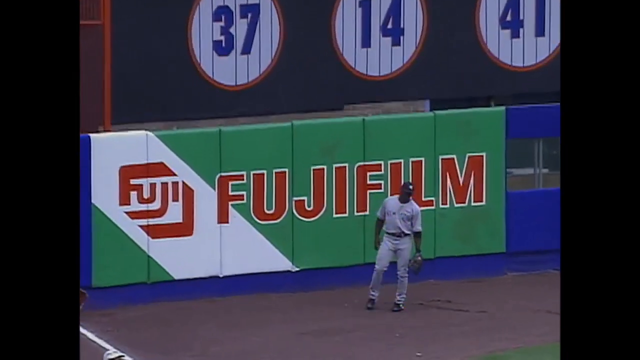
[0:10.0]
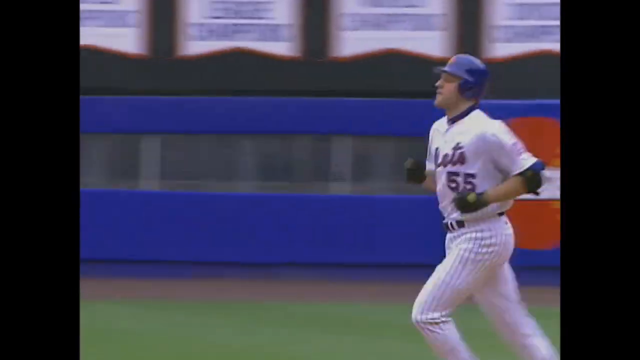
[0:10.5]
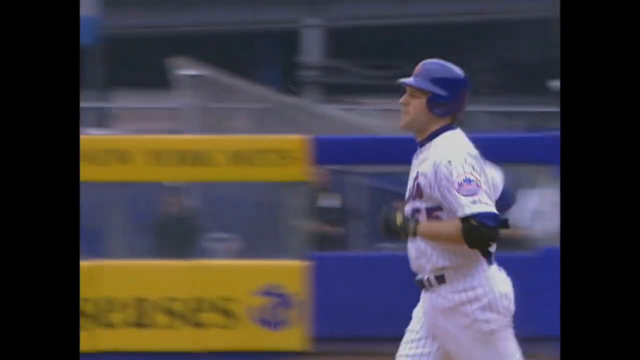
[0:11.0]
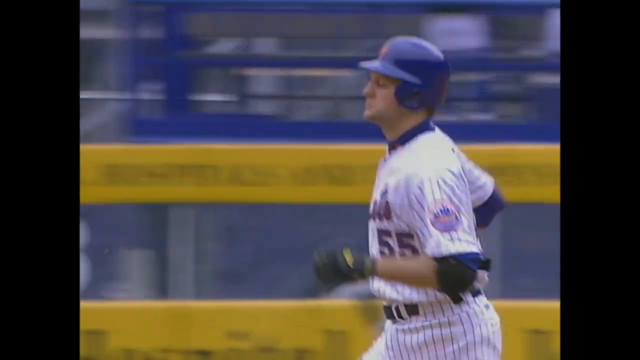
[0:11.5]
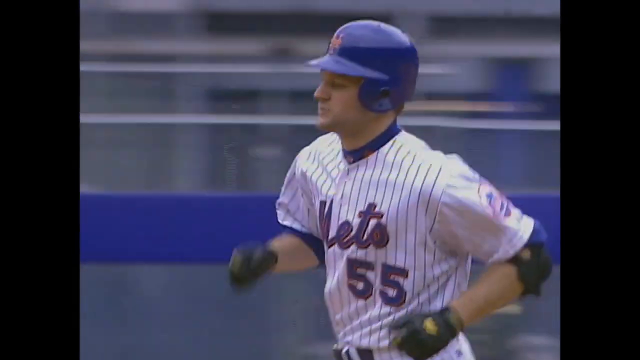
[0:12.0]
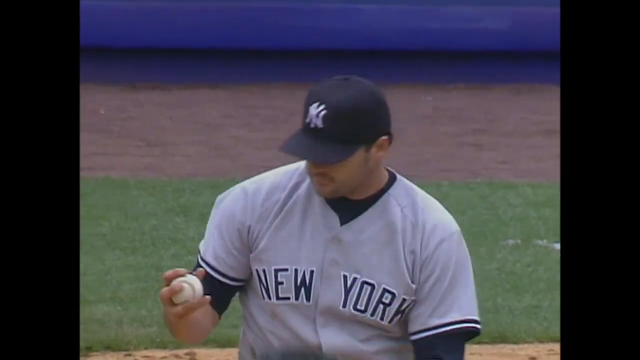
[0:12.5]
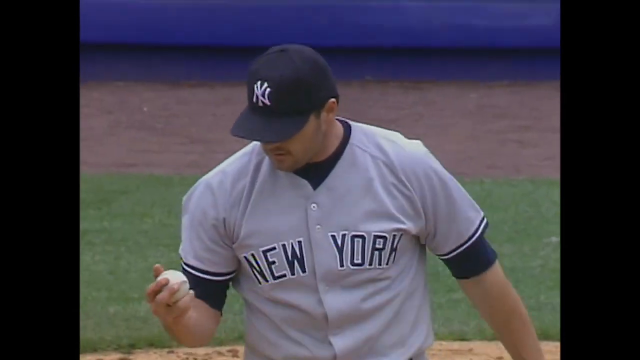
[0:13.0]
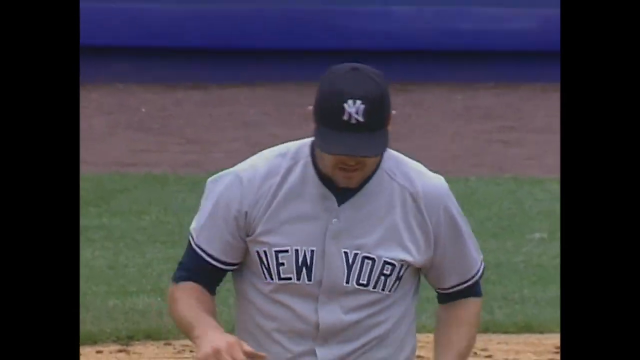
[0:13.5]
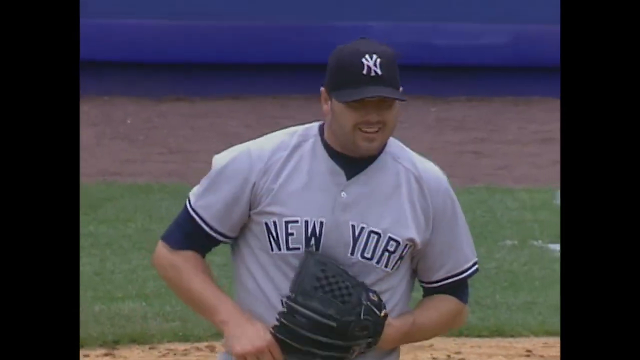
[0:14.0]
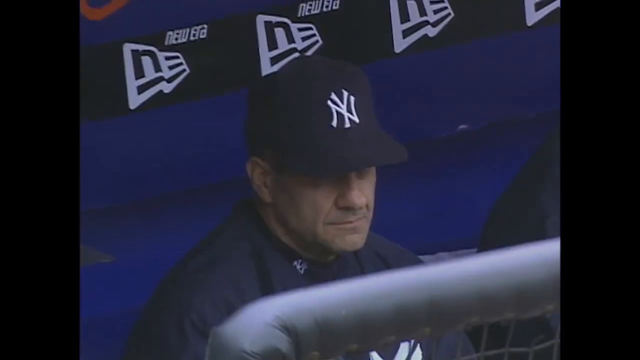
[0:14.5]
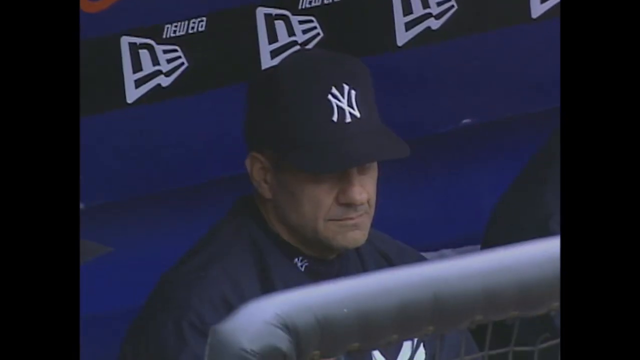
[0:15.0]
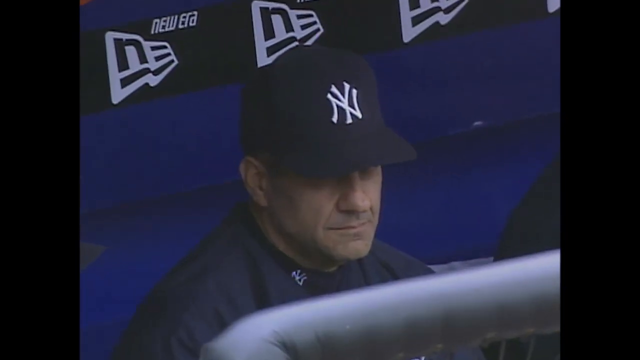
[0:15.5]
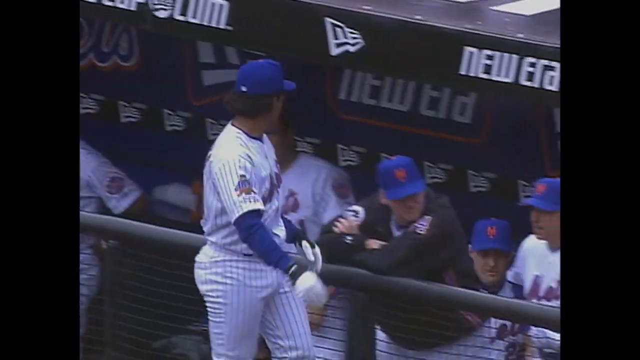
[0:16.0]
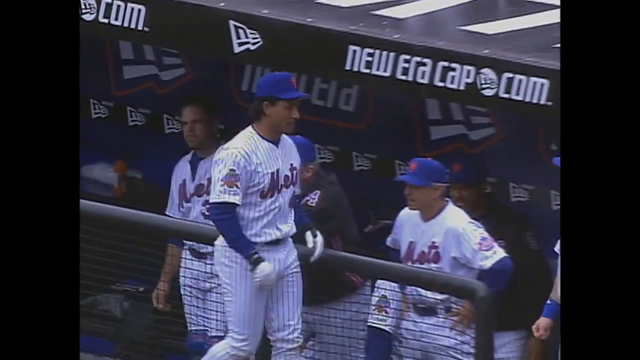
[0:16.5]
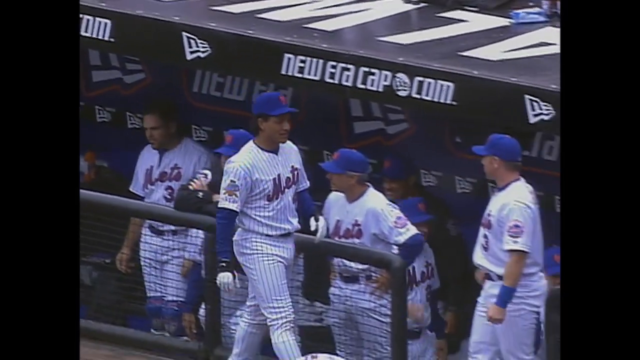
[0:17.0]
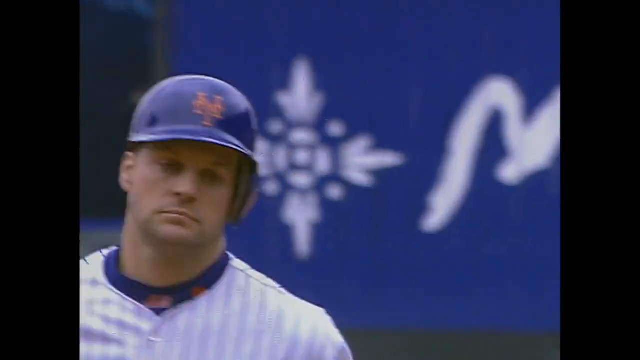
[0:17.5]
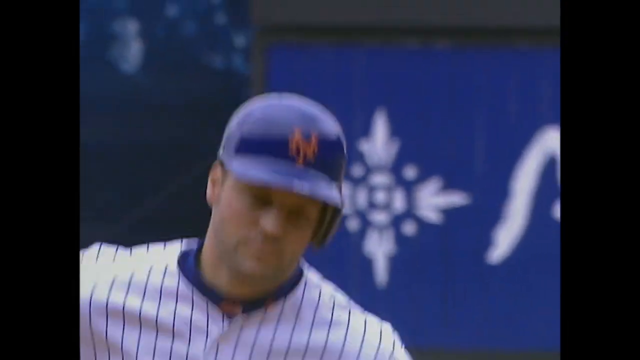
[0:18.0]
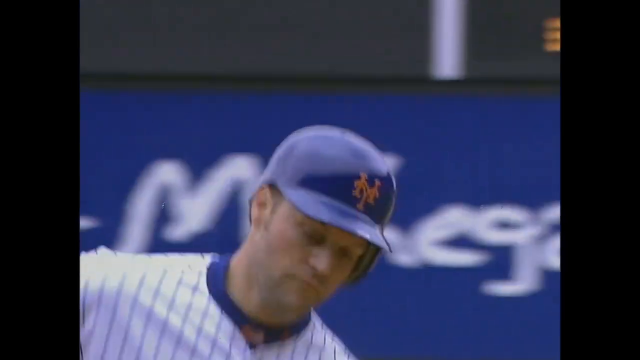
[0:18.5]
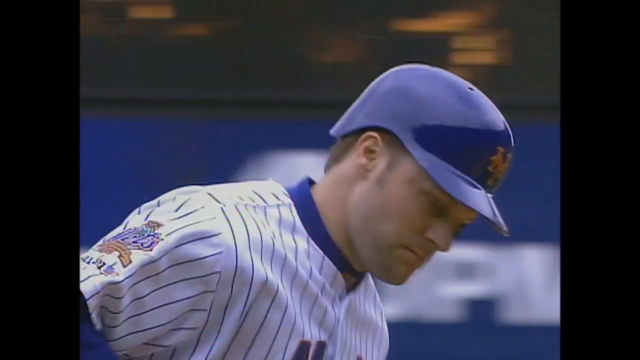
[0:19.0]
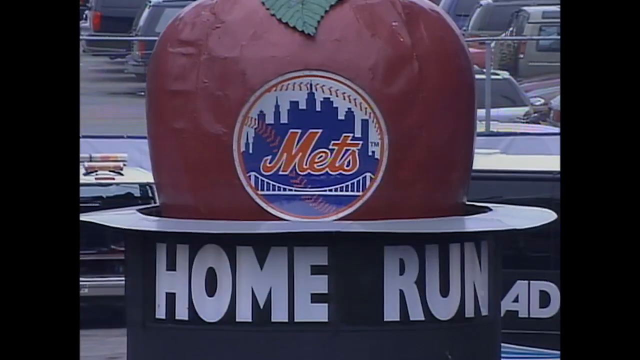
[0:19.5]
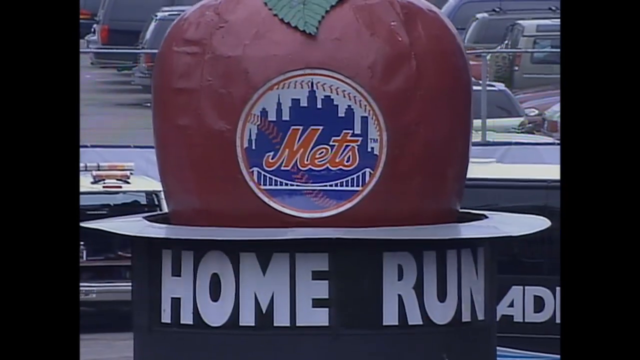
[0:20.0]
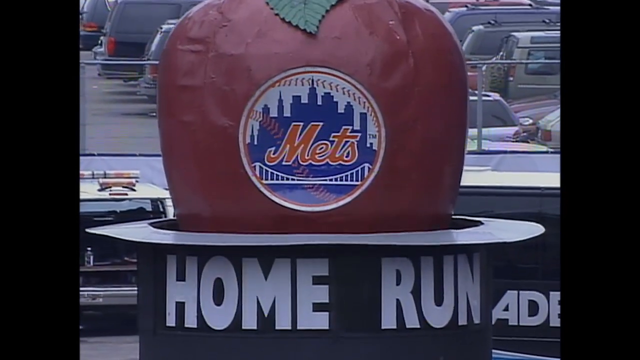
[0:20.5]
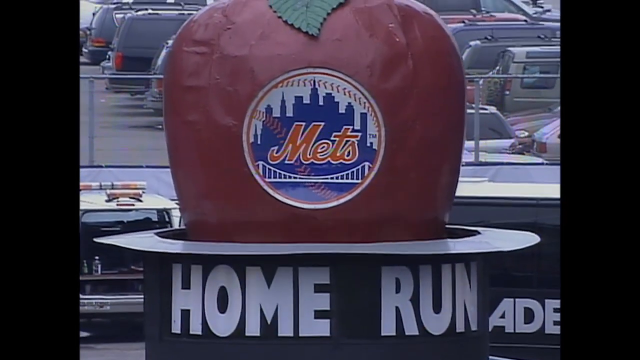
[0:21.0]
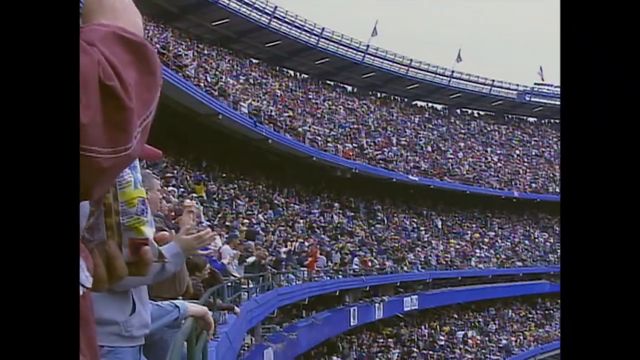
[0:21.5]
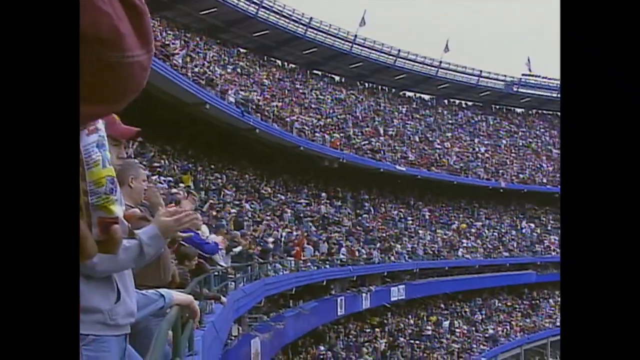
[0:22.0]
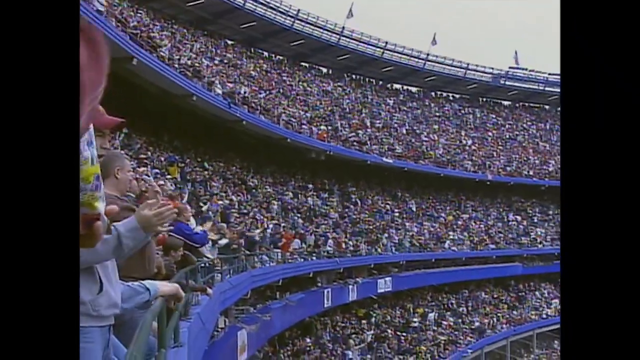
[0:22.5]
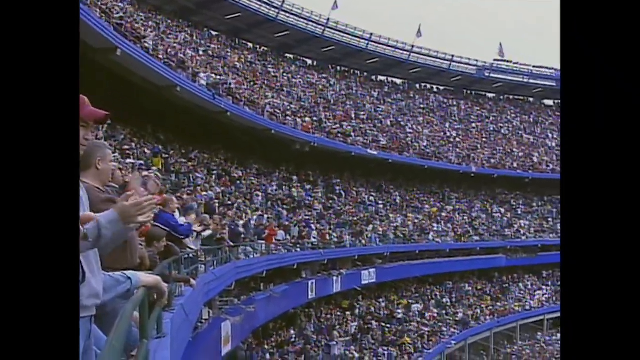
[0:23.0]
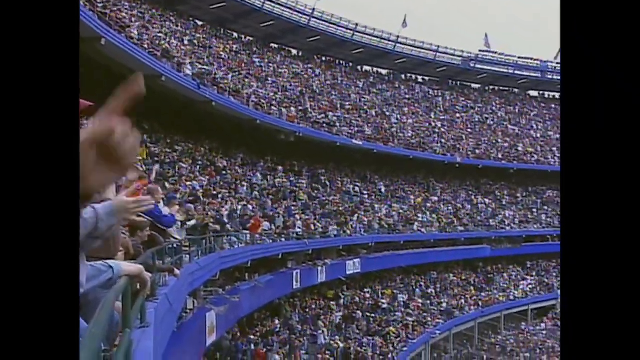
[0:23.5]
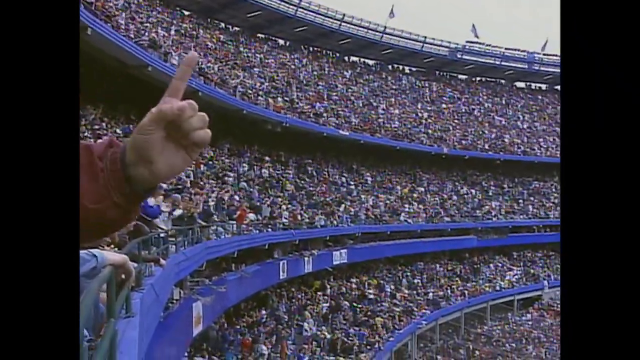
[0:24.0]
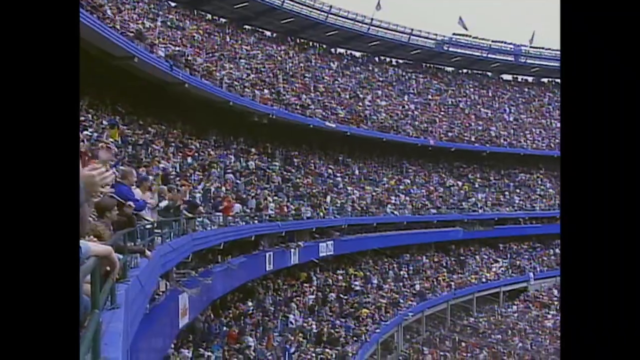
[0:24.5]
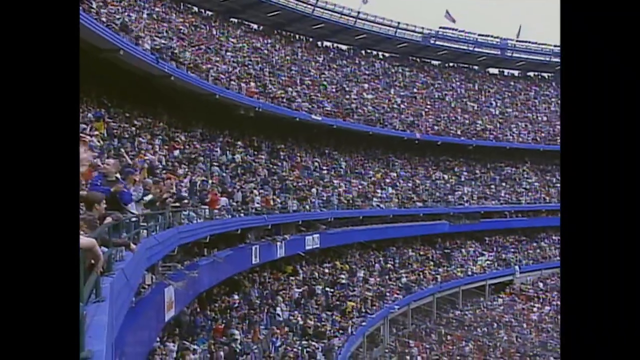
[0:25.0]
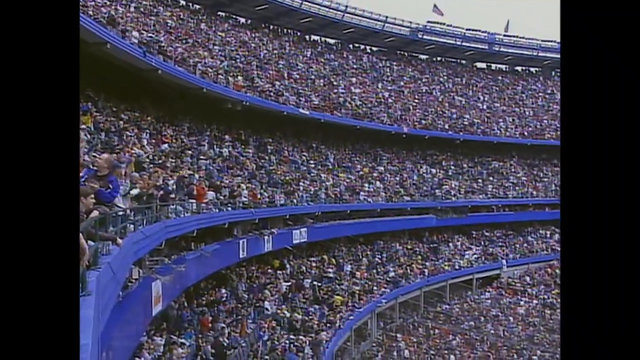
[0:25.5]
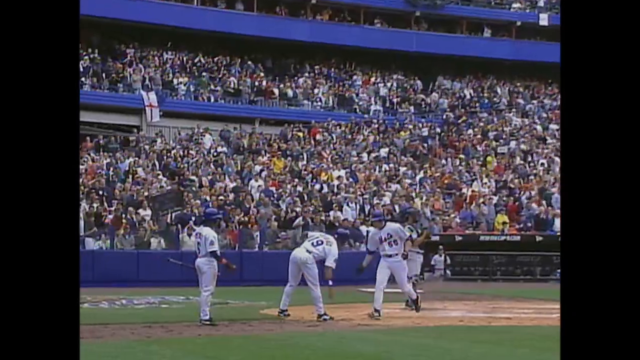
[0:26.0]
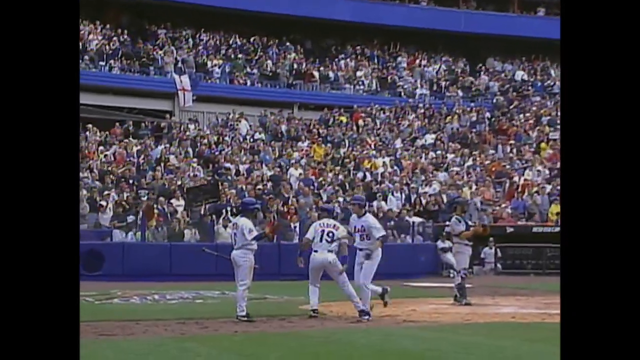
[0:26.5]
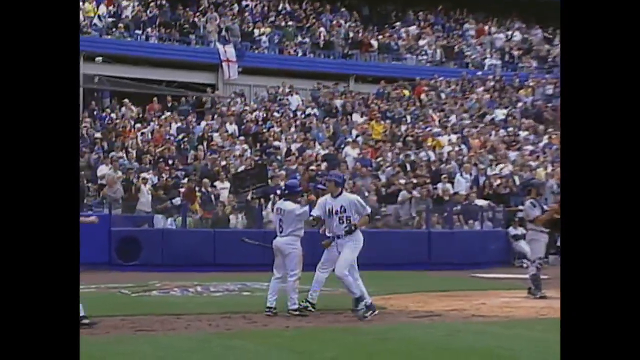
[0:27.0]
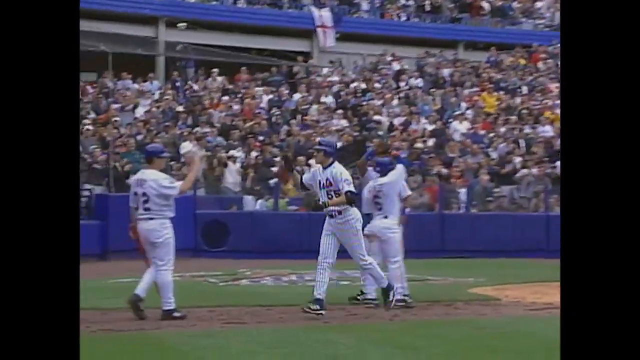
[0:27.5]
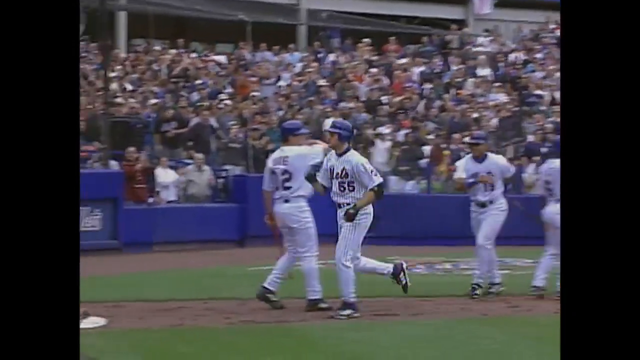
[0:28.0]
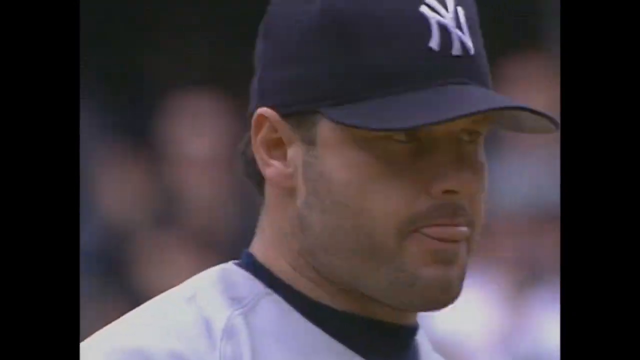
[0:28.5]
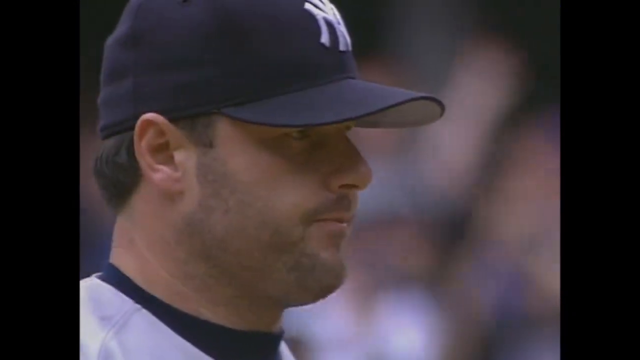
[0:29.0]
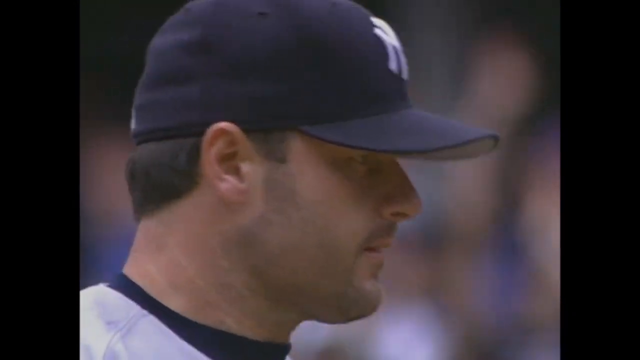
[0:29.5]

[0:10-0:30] A New York Yankees outfielder in a gray jersey and dark blue hat stands in front of a blue and green fence. Above the fence are retired numbers in blue: 37, 14 and 41. The camera transitions to the Mets hitter jogging around the bases, his left and right arms moving forward and back with his steps. The scene cuts to the Yankees pitcher, who wears a gray jersey reading "New York" and a dark blue hat. He holds a ball in his right hand, stares at it, shifts it around his hand in a circular motion, and rubs it against his jersey. Next comes a dugout view of a Yankees manager, then the New York Mets dugout, where one player outside the dugout walks from left to right and brings his arms up to give a teammate a high five. The batter is shown rounding the bases, followed by the New York Mets apple rising above the home run hat. A wide view shows the crowd cheering, with a mix of people standing and clapping. The batter touches home plate and celebrates with his teammates, giving one teammate a low high five as he runs by and another a high five as he runs toward the dugout; another teammate raises his hand and they exchange a high five. The Yankees pitcher licks his lips and turns his head to the left.